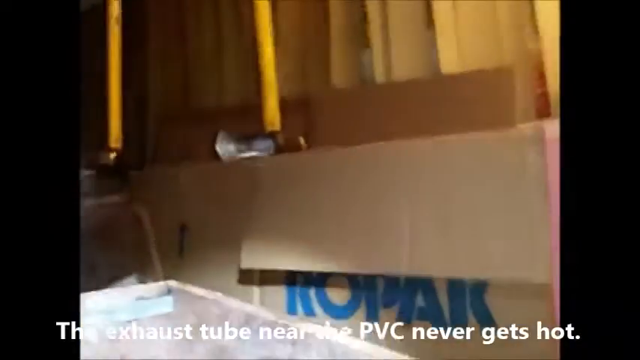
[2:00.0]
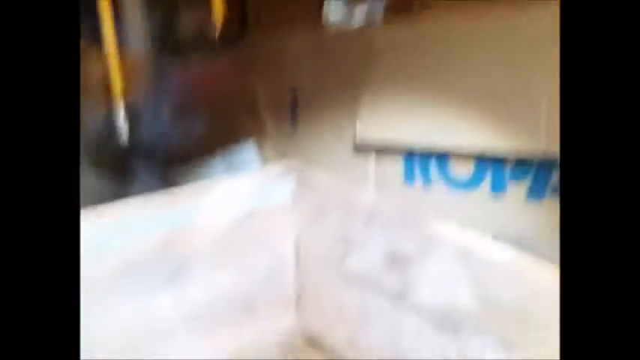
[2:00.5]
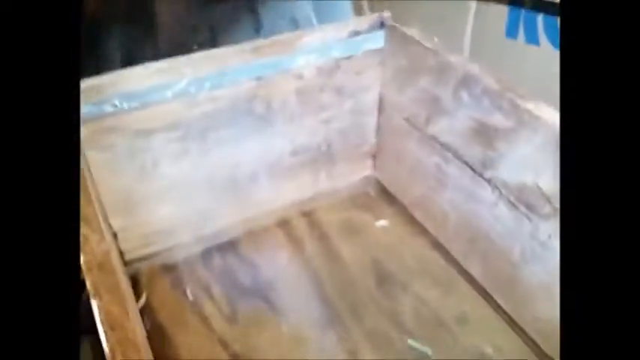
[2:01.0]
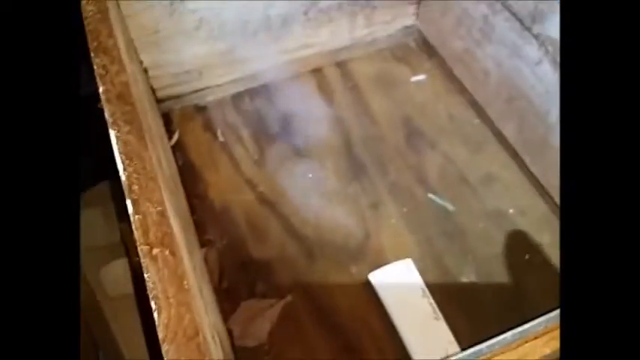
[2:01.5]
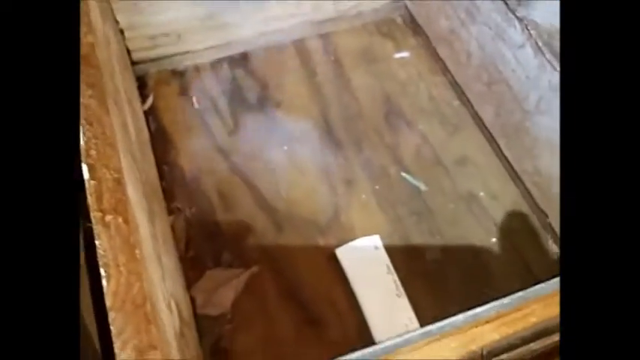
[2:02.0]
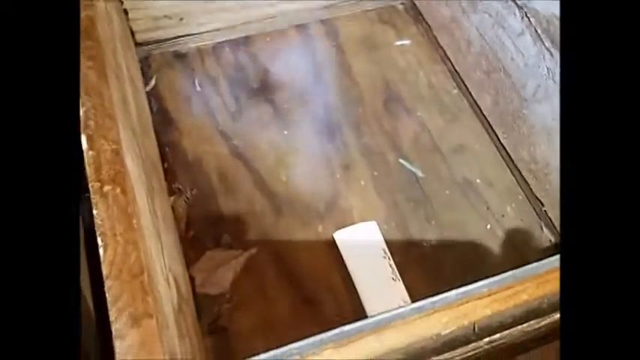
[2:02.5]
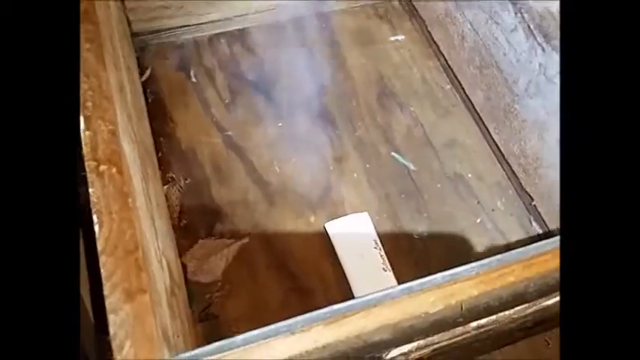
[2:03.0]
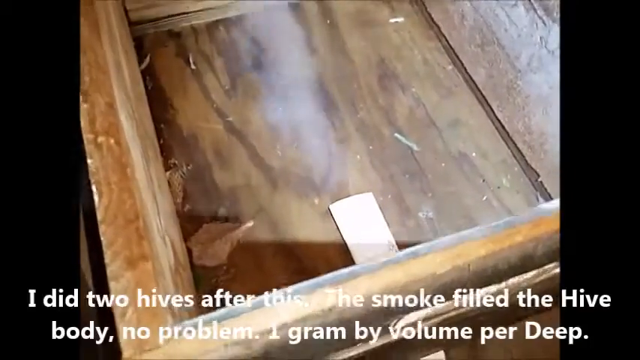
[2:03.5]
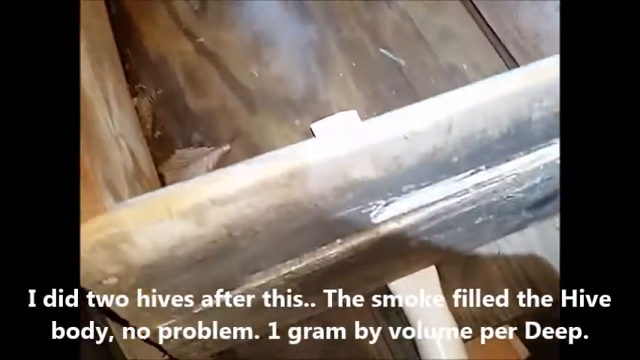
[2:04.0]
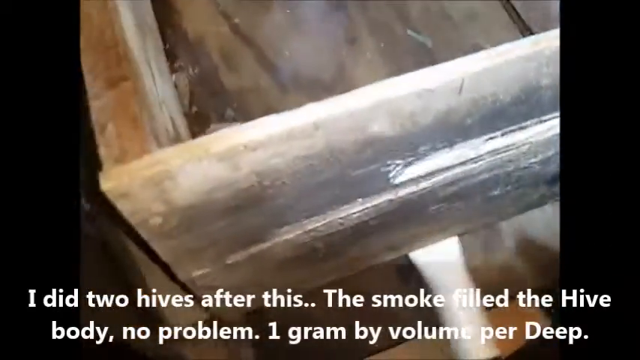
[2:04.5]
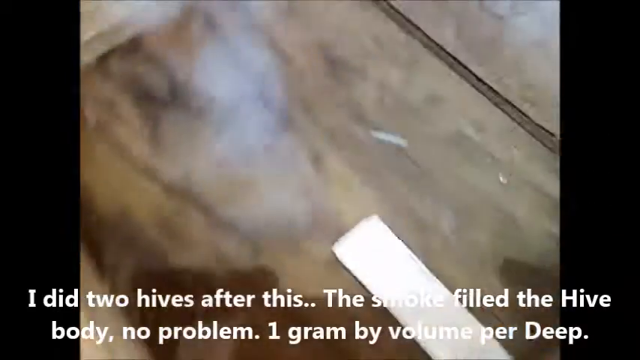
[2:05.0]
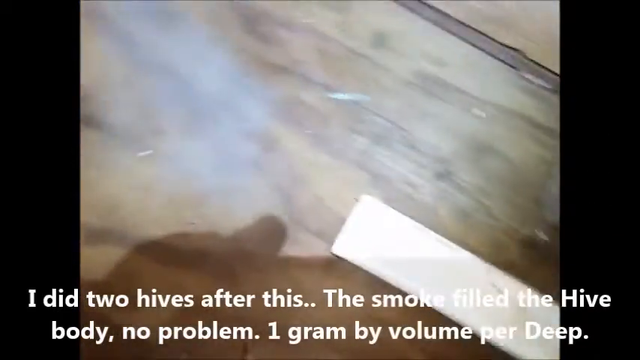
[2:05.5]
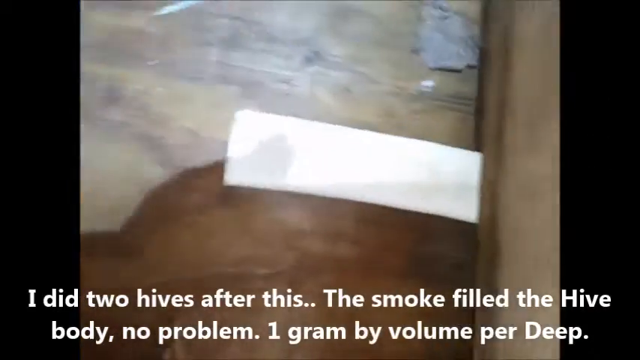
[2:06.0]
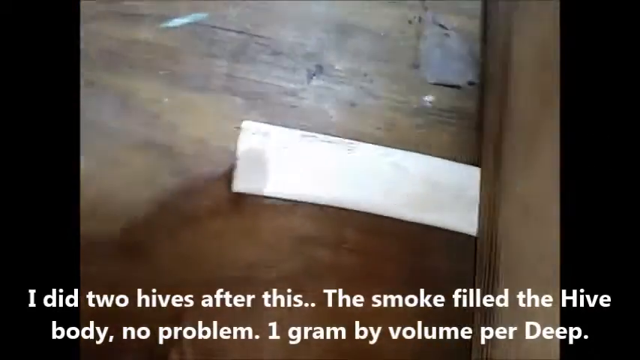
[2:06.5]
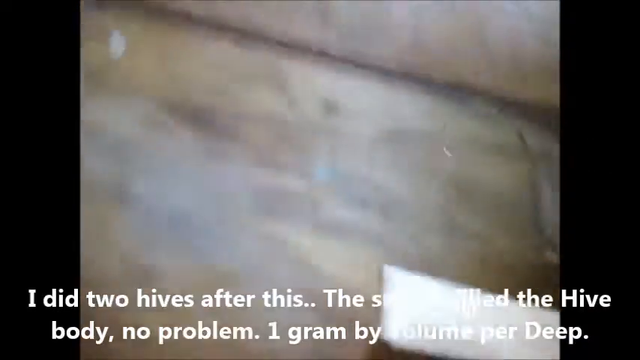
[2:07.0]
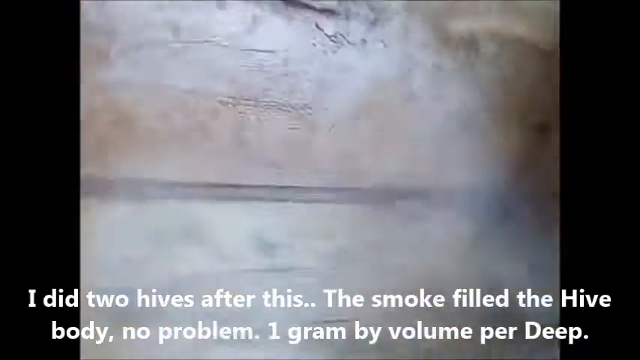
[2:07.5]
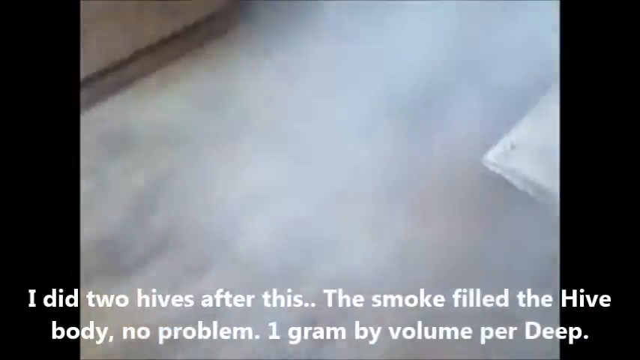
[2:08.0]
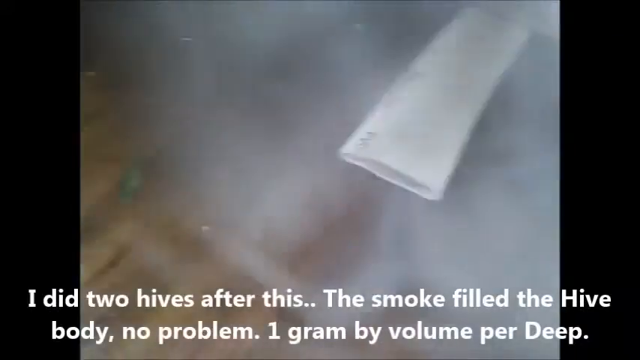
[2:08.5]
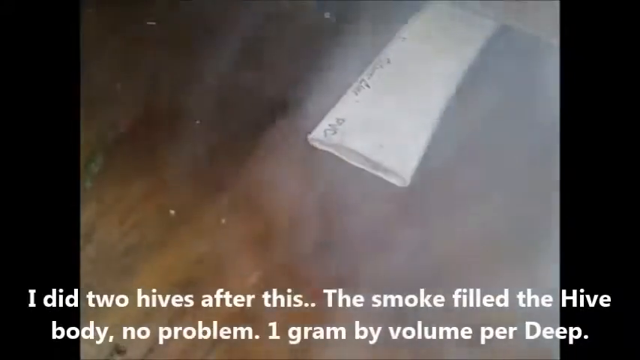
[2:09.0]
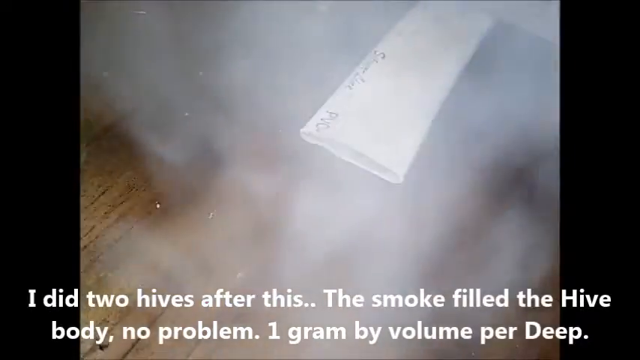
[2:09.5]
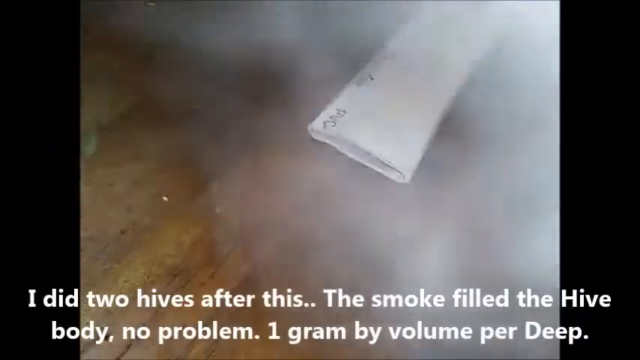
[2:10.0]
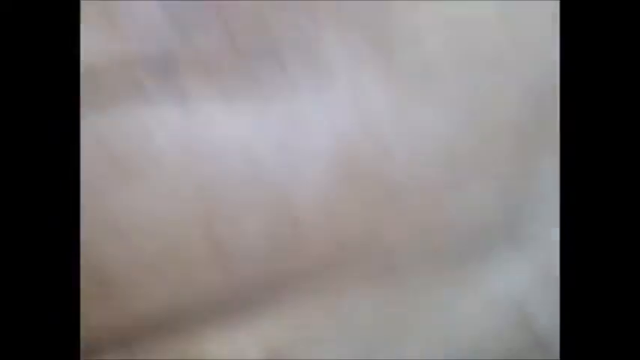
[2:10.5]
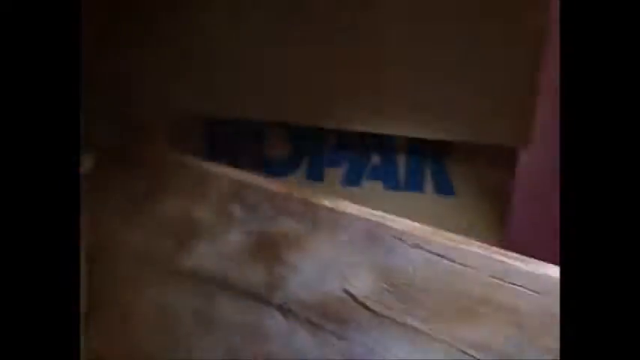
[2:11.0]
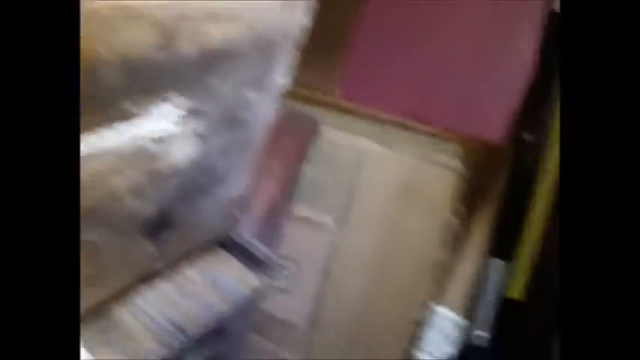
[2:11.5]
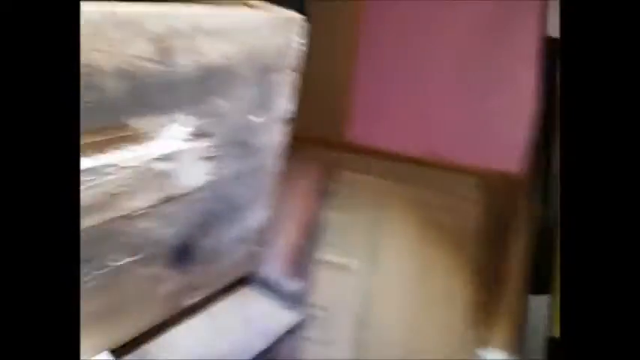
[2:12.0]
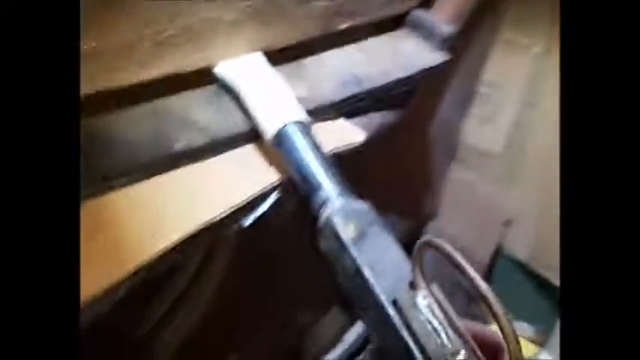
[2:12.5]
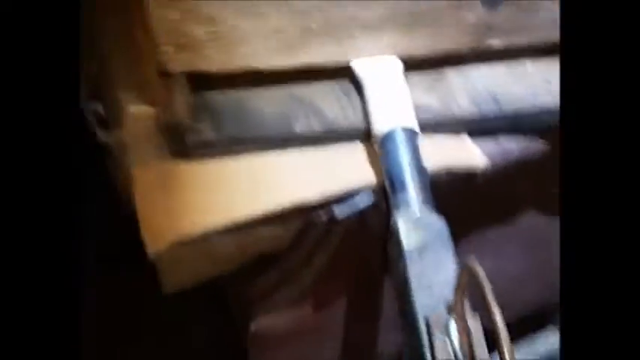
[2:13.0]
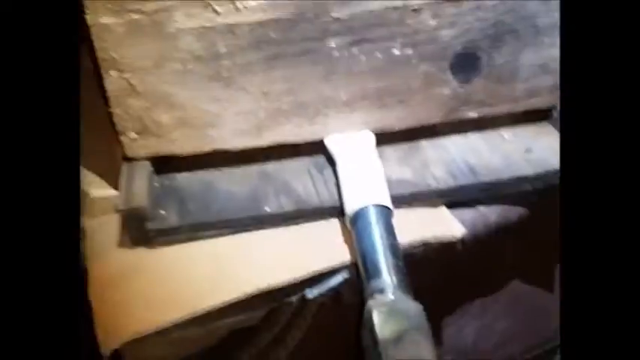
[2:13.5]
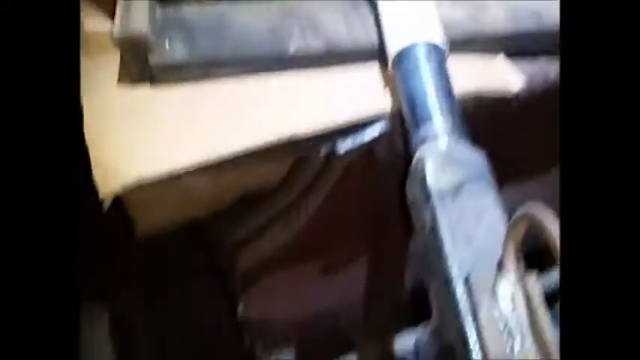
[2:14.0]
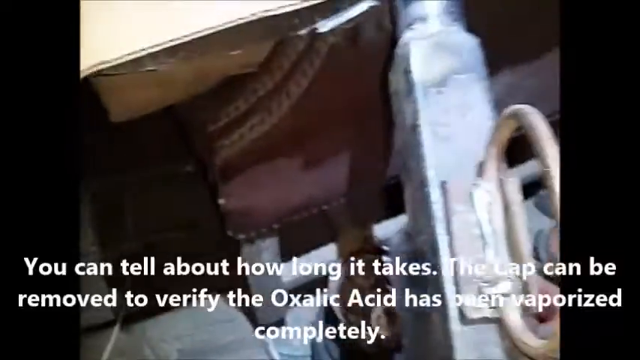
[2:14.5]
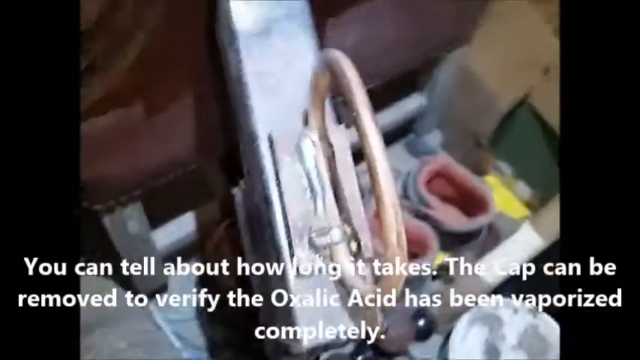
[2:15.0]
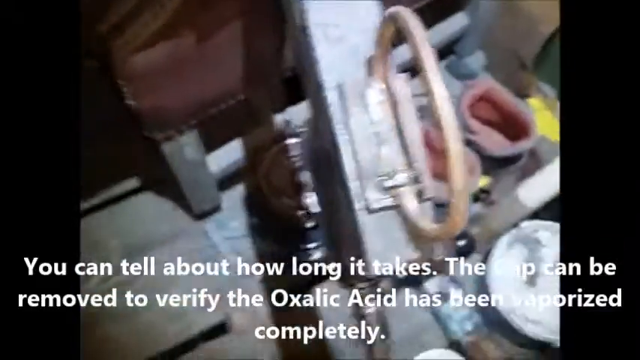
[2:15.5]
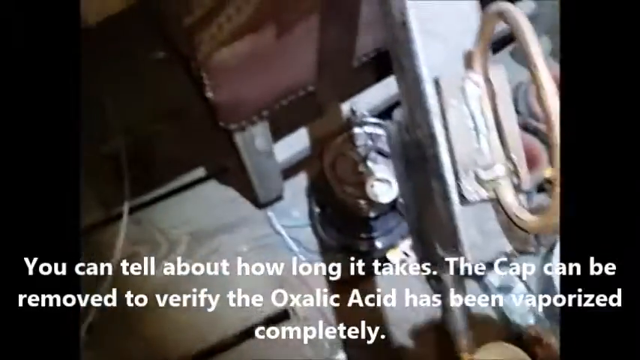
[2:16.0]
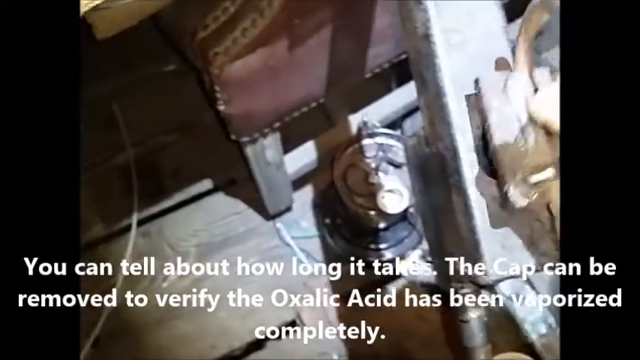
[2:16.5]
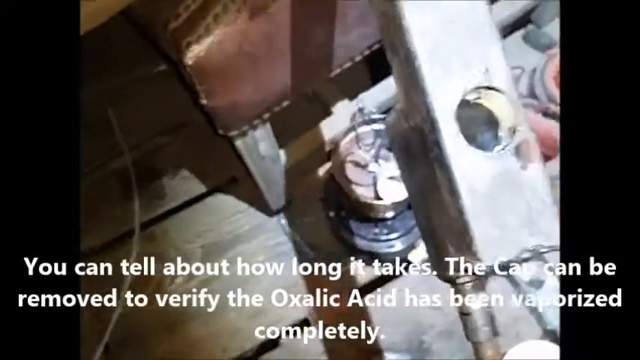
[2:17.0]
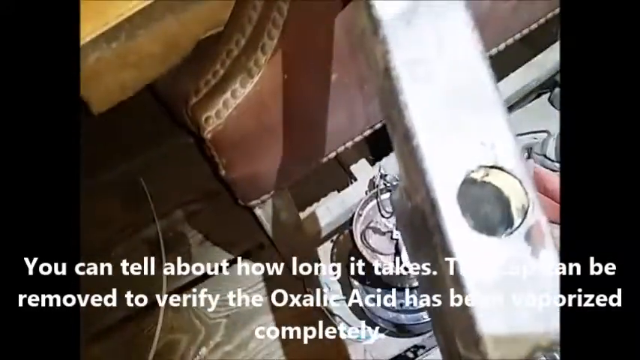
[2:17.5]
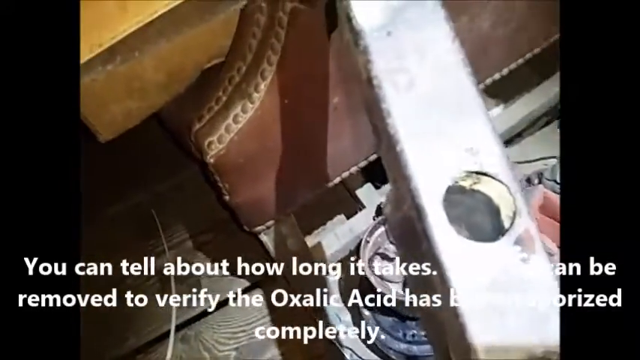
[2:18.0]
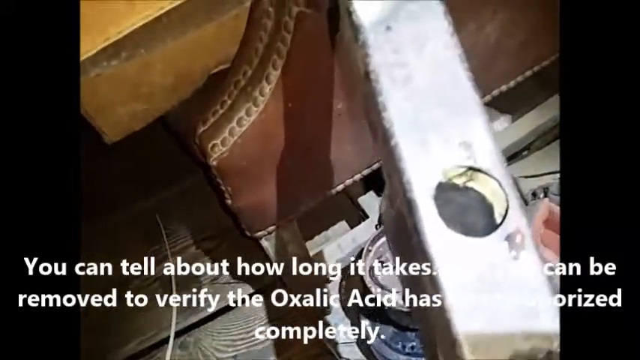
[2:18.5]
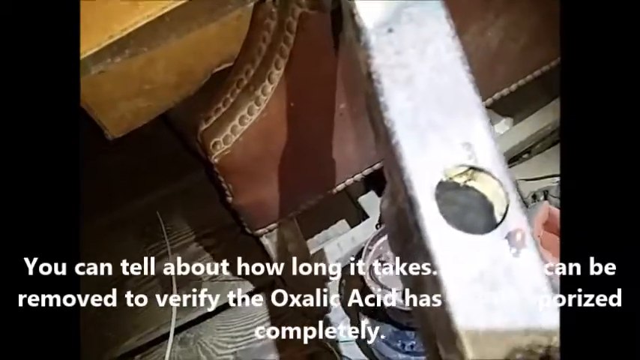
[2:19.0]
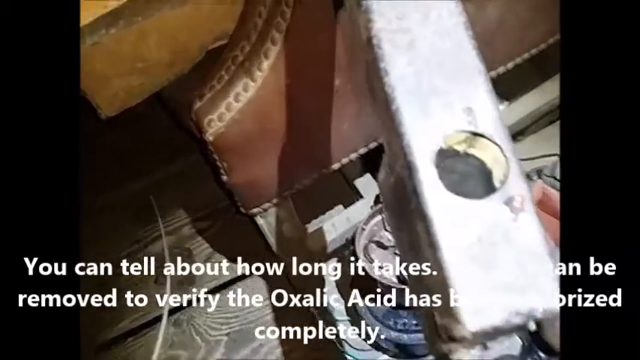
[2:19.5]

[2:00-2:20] Water vapor comes into the box from the pipe; the piece of pipe sticking into the box is white. The water vapor mists into the box, and the person gets a very close-up shot of it, showing the hole at the front of the piece of PVC pipe. The view goes back to the person taking the cap off the top of the pipe. The shoes are on the ground, with different pieces of materials and items scattered about. The subtitles read "I did two hives after this. The smoke filled the hive body no problem. One gram by volume per deep. You can tell about how long it takes. The cap can be removed to verify the oxalic acid has been vaporized completely."